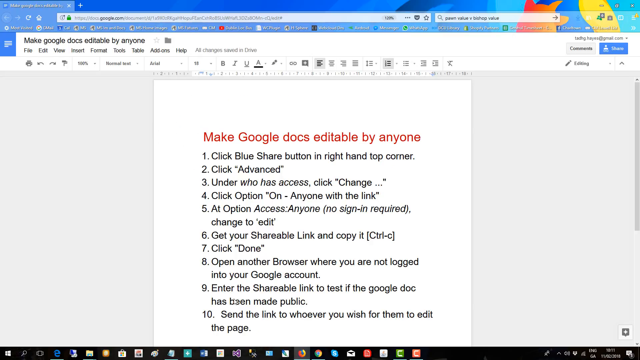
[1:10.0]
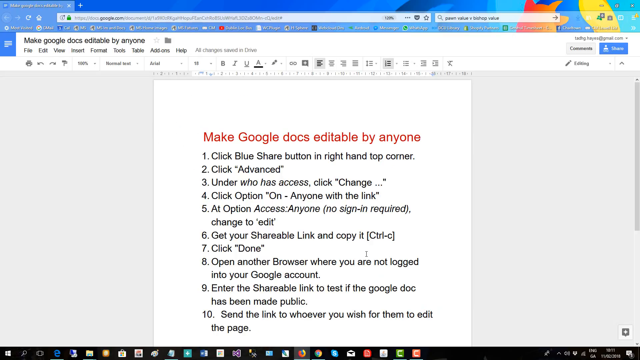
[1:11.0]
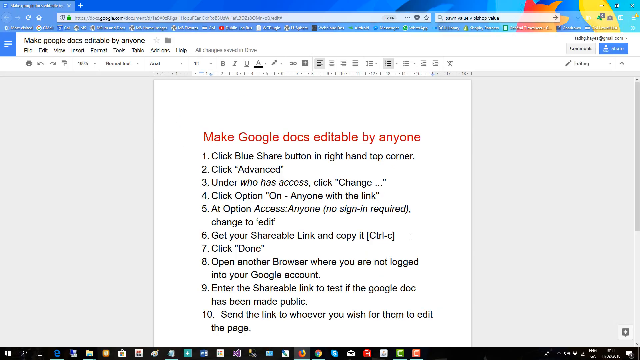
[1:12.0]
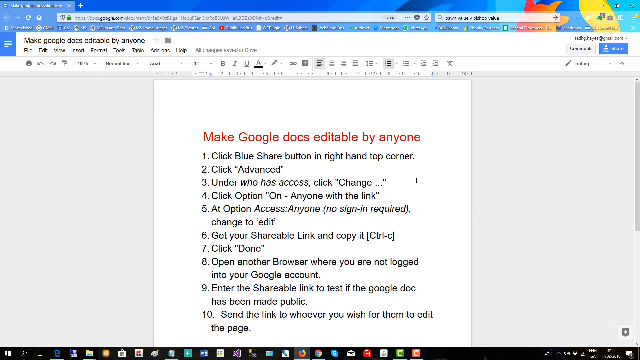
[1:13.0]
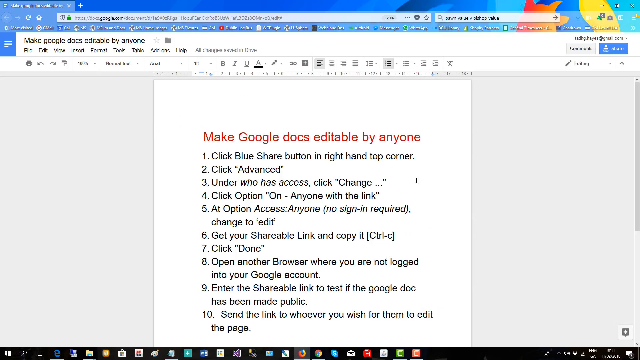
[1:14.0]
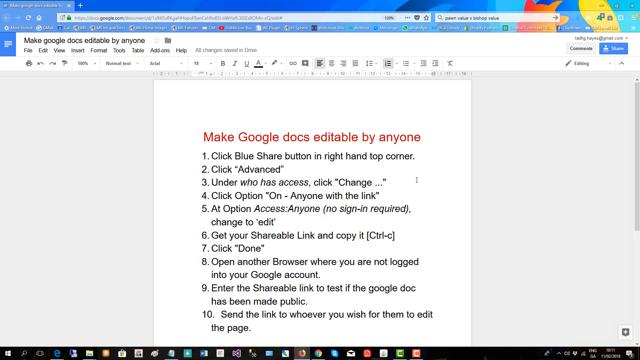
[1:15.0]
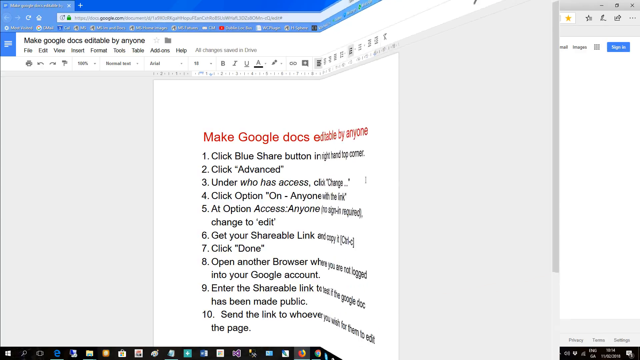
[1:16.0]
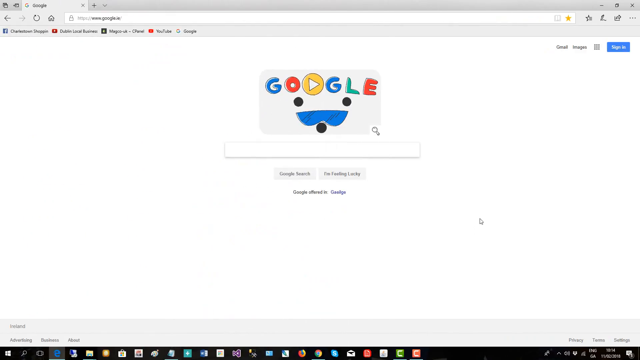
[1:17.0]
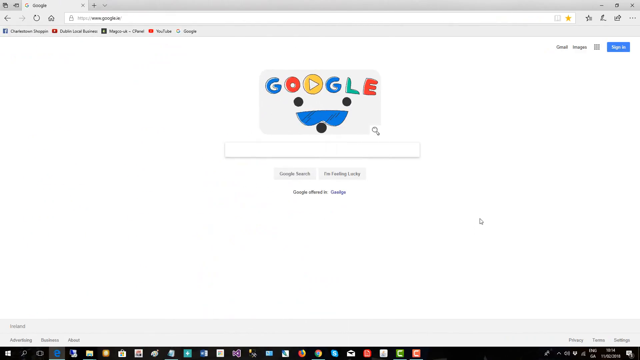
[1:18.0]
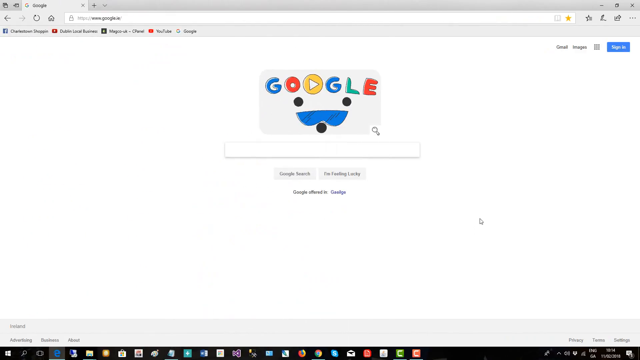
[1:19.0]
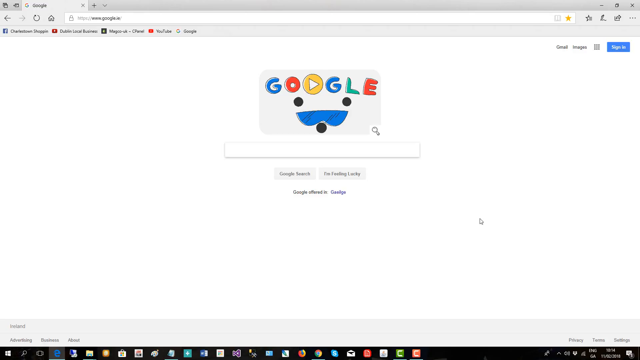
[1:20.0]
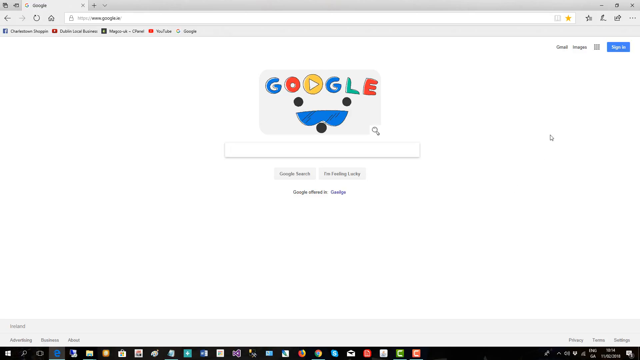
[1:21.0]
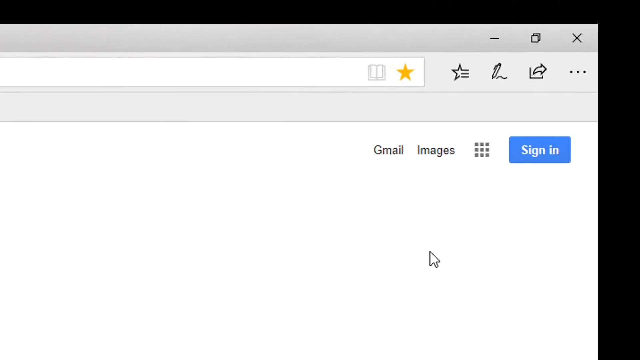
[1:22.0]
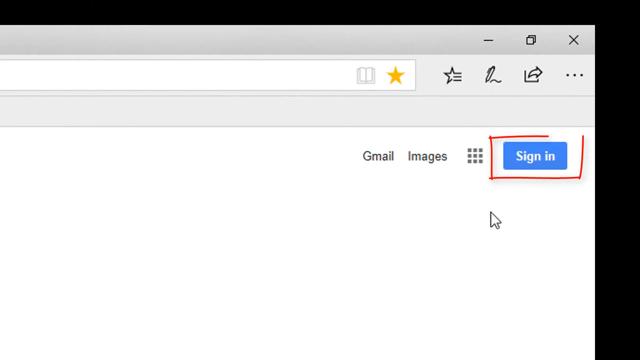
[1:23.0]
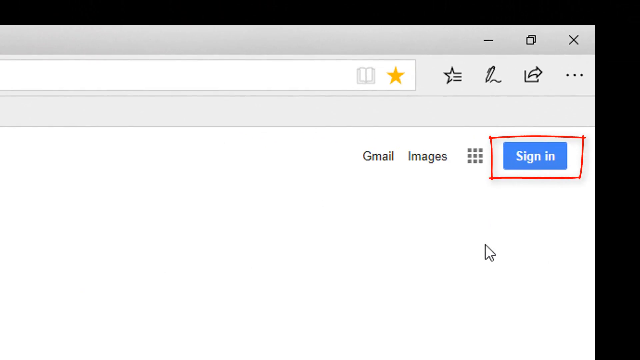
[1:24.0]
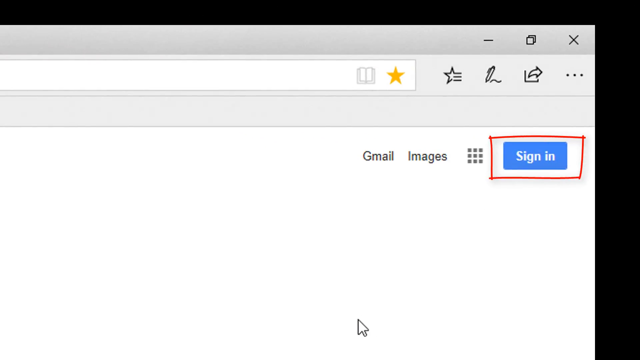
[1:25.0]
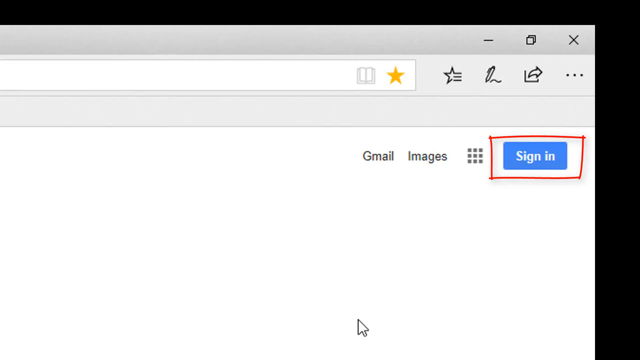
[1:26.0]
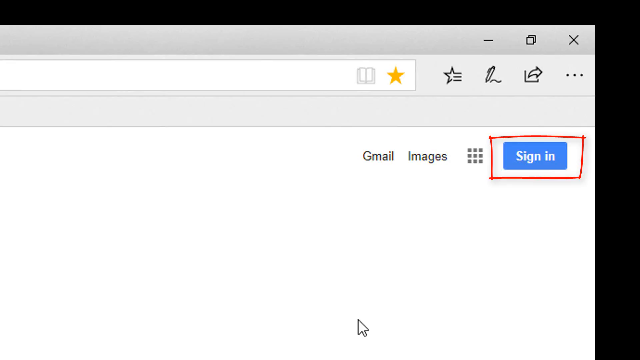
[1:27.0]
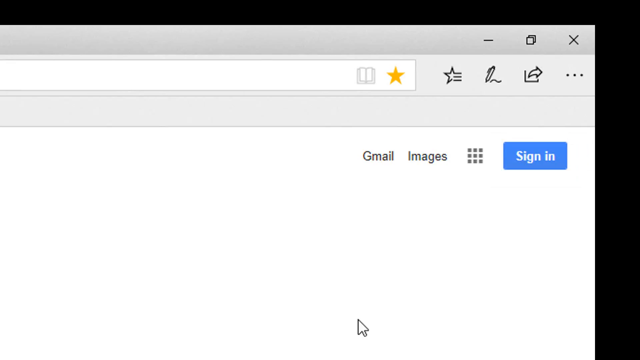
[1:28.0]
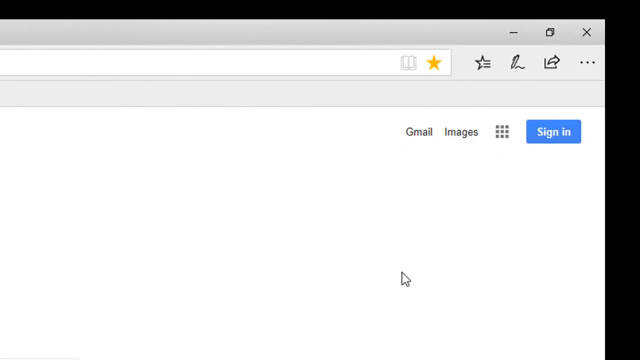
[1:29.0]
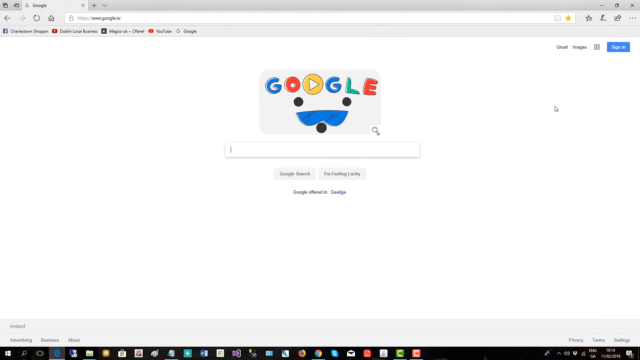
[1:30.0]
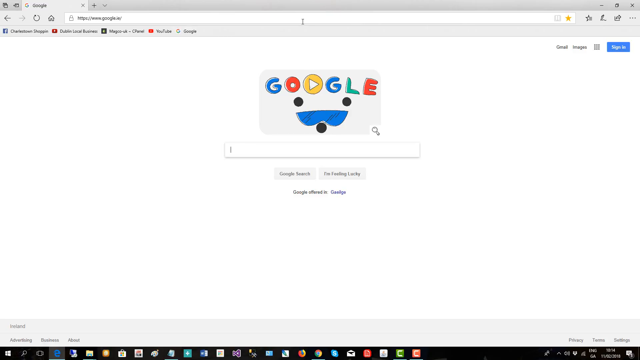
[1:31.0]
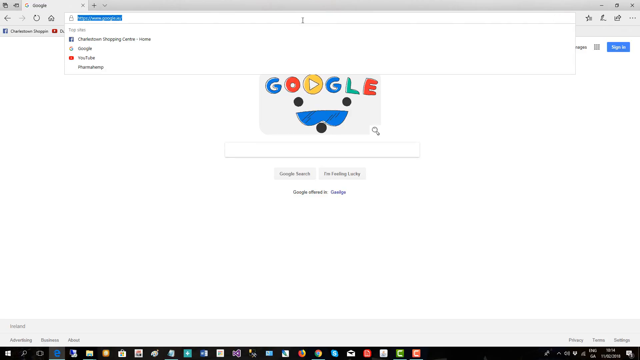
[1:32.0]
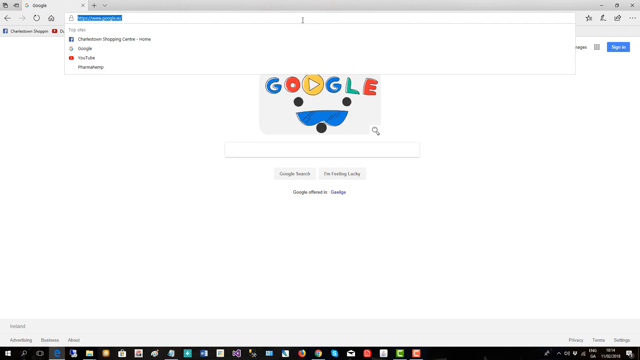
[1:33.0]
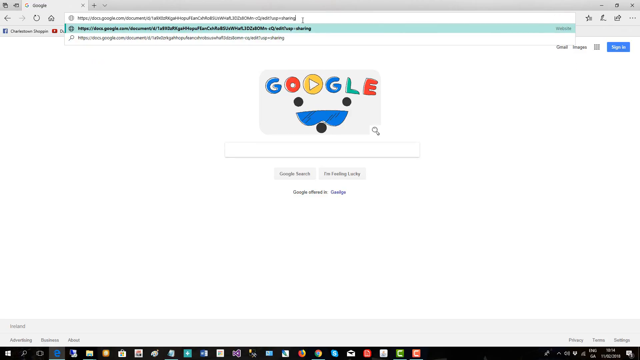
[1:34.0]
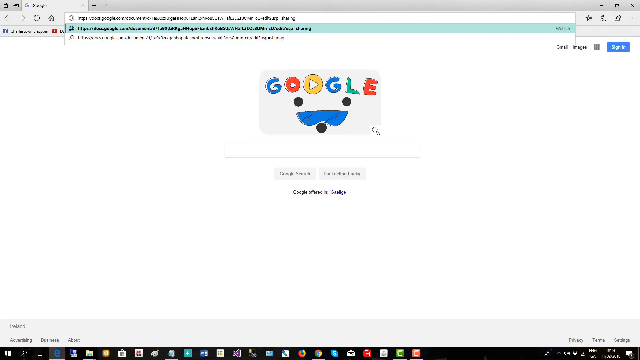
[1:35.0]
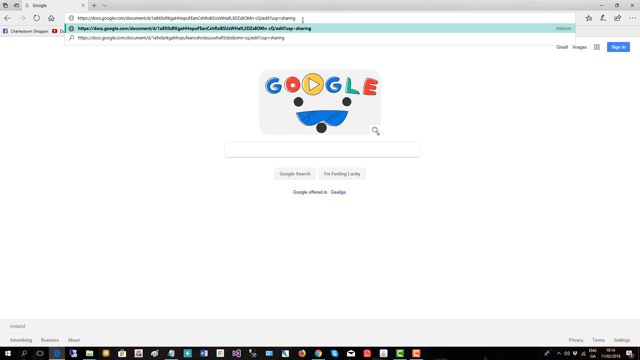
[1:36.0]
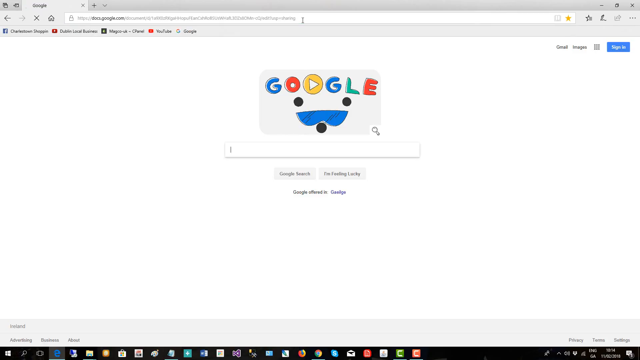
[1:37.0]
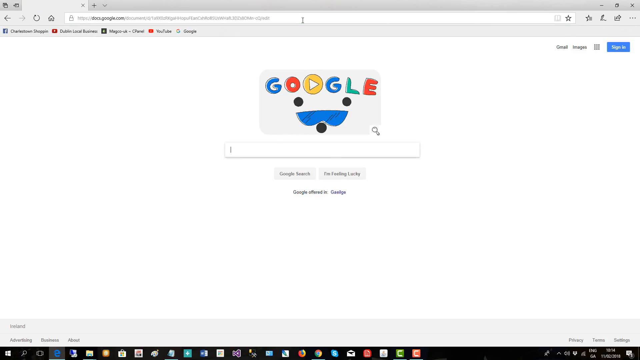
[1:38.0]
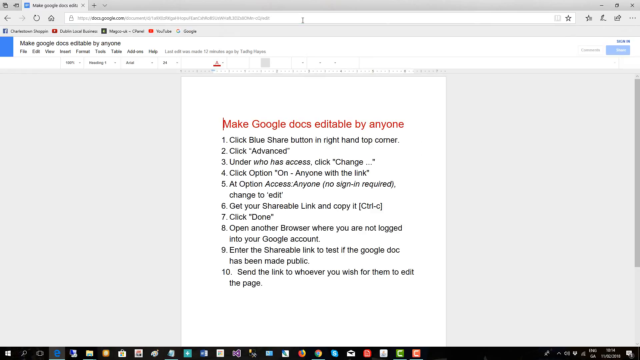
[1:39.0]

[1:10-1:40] The screen shows the page about making Google Docs editable by anyone, with a file at the top, so it looks like a notepad. In the main notepad area, a list titled "make Google Docs editable by anyone" runs through 10 items, starting with "click the blue square" and "advanced" and continuing down through items about the shareable link and copying the link. Once the video plays, the page folds like a book, and the main Google page appears with a little red box circling the sign in.